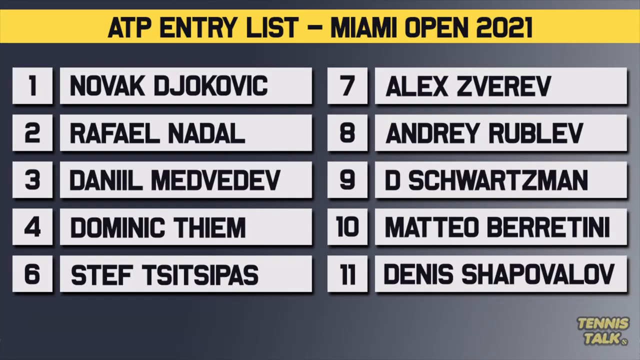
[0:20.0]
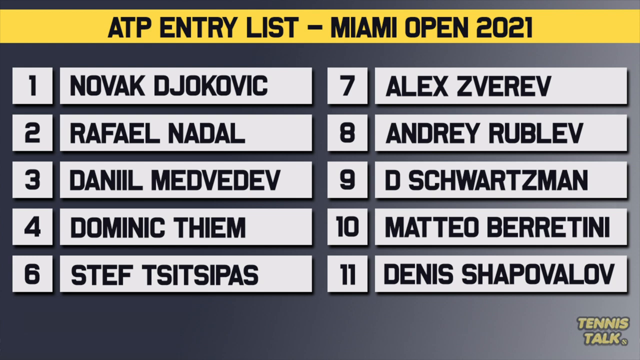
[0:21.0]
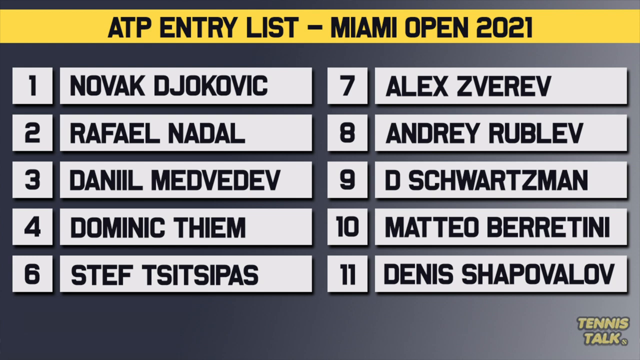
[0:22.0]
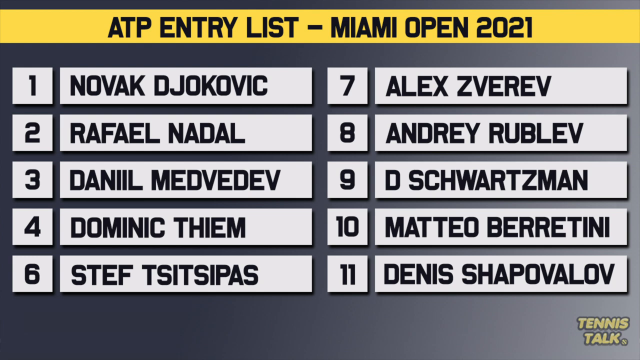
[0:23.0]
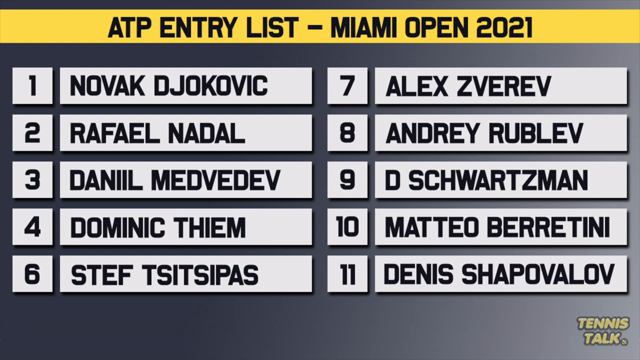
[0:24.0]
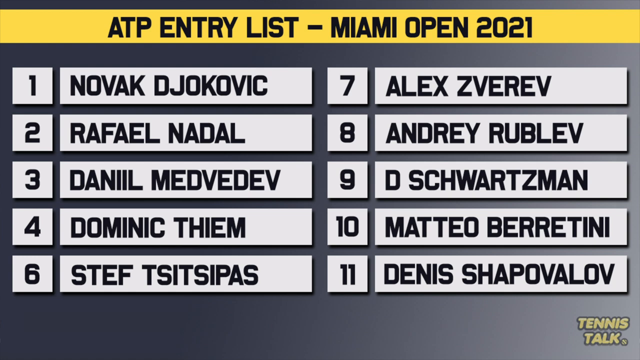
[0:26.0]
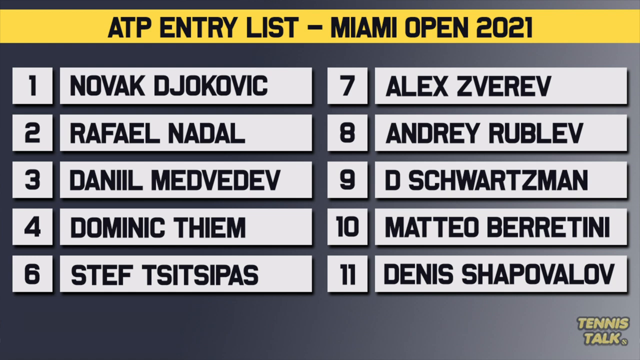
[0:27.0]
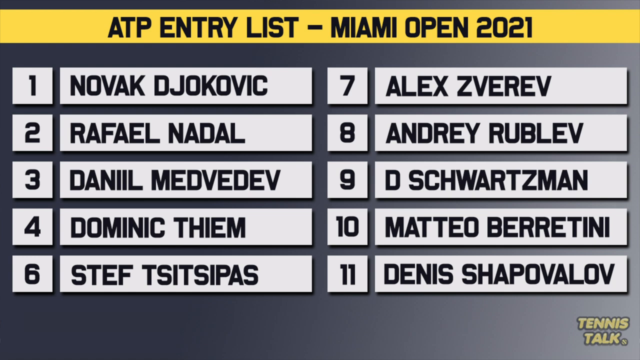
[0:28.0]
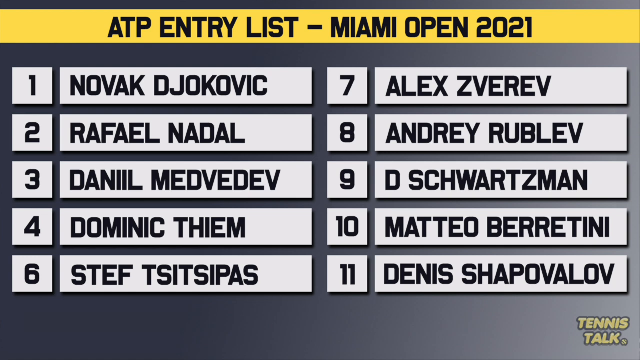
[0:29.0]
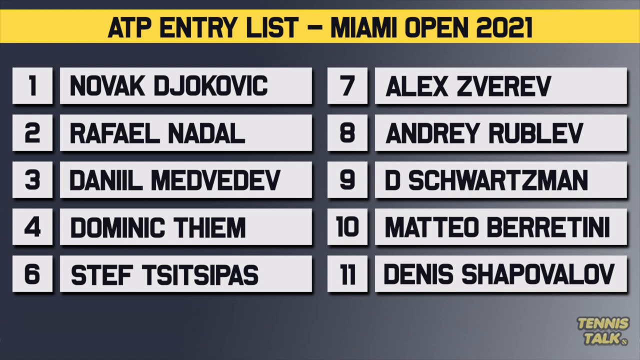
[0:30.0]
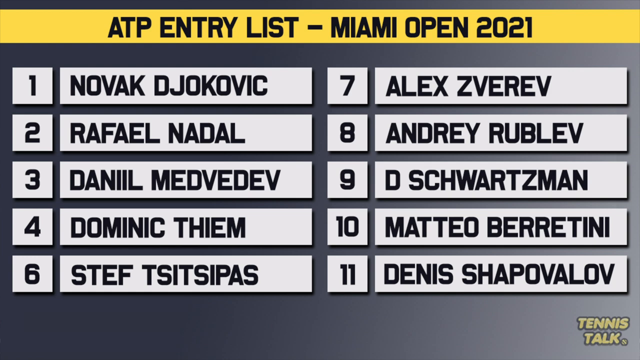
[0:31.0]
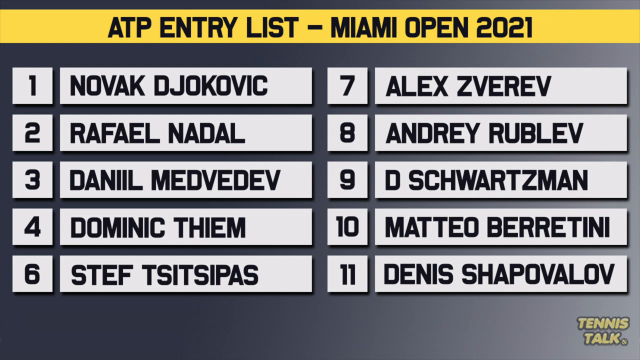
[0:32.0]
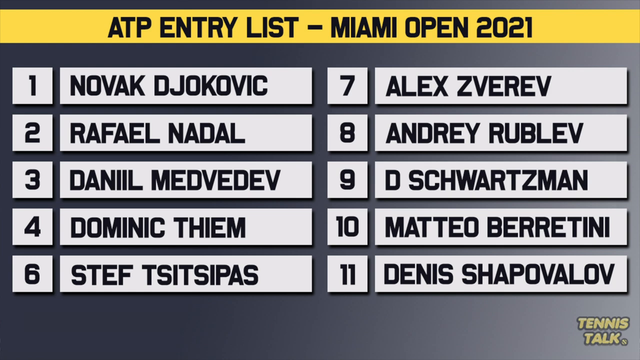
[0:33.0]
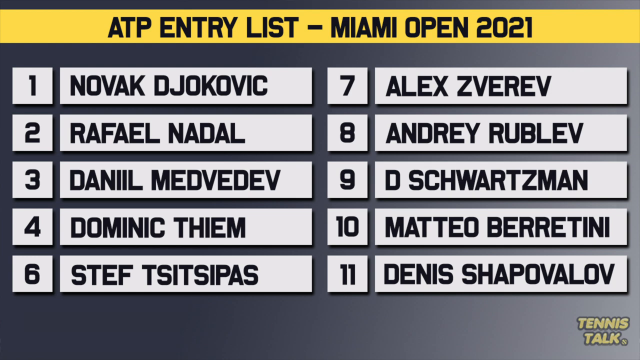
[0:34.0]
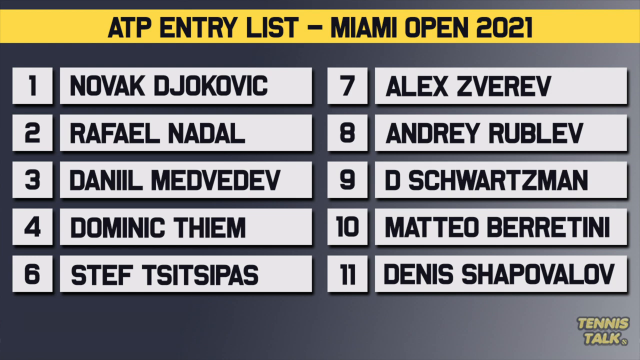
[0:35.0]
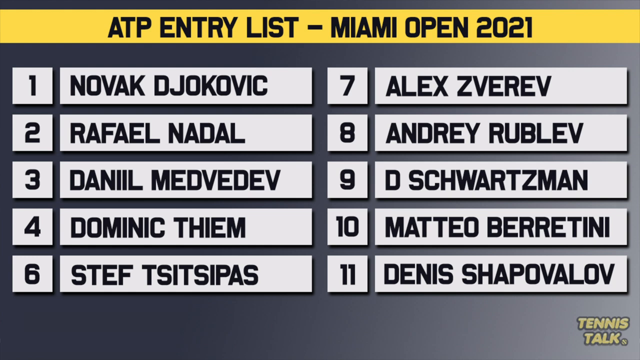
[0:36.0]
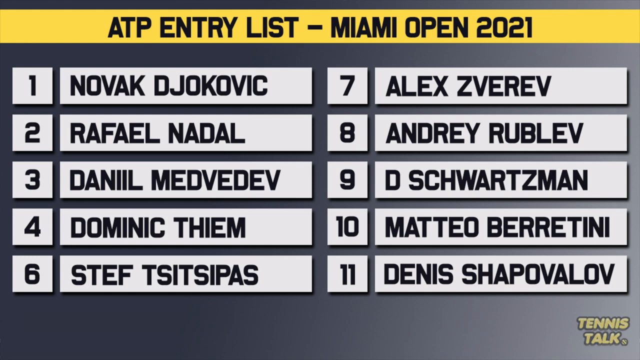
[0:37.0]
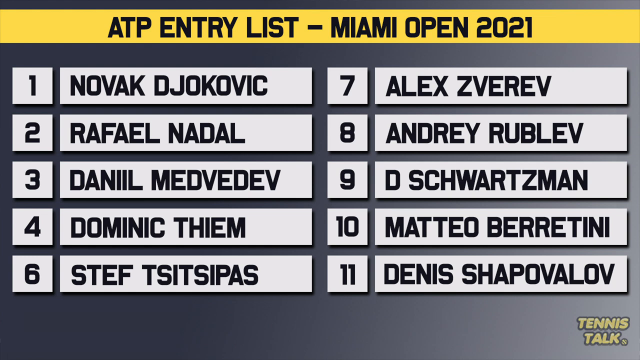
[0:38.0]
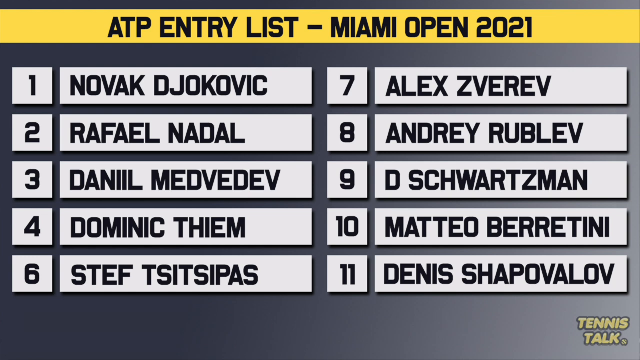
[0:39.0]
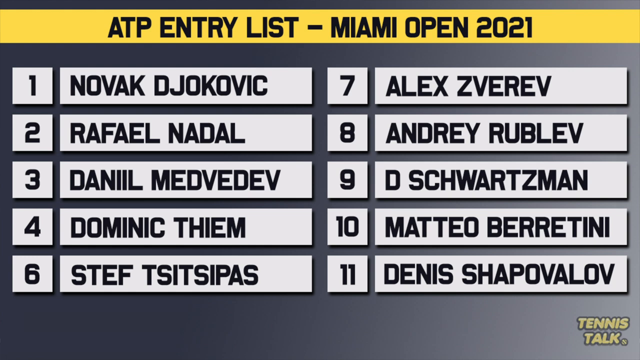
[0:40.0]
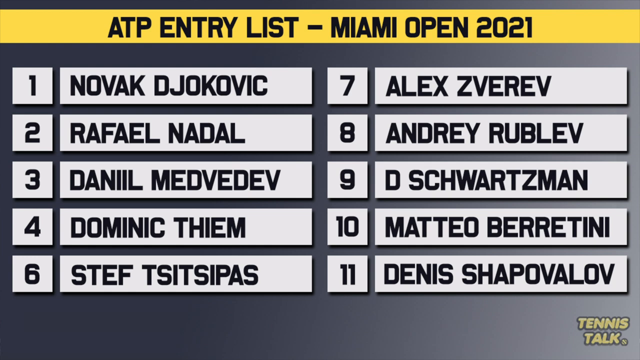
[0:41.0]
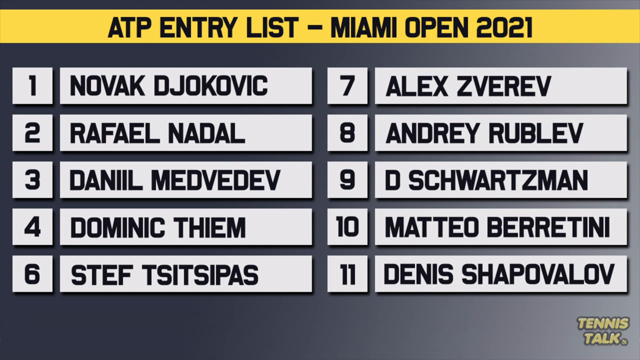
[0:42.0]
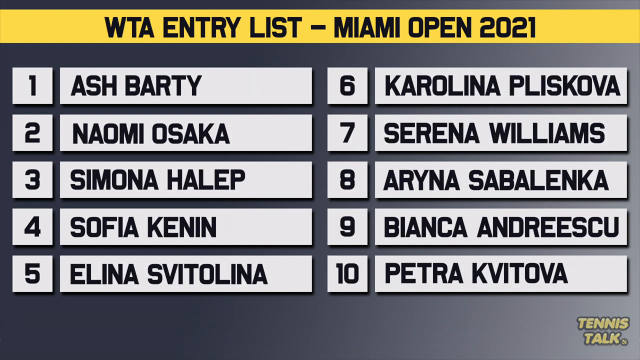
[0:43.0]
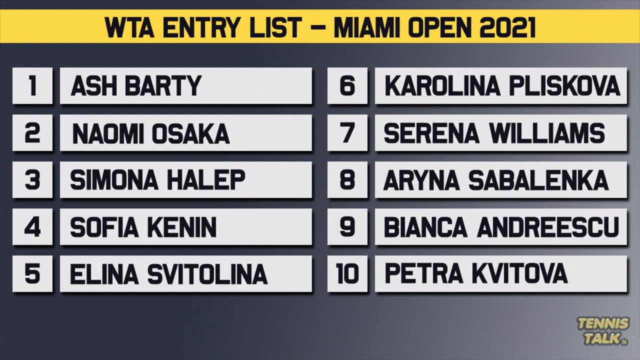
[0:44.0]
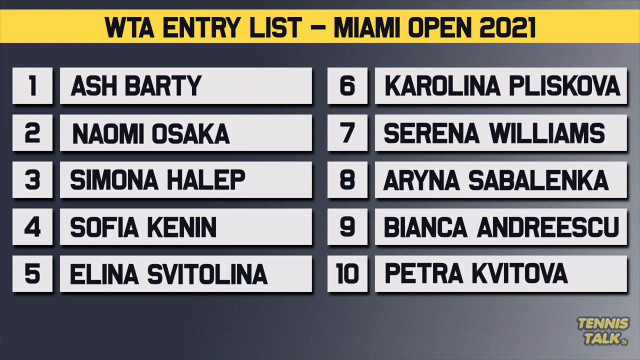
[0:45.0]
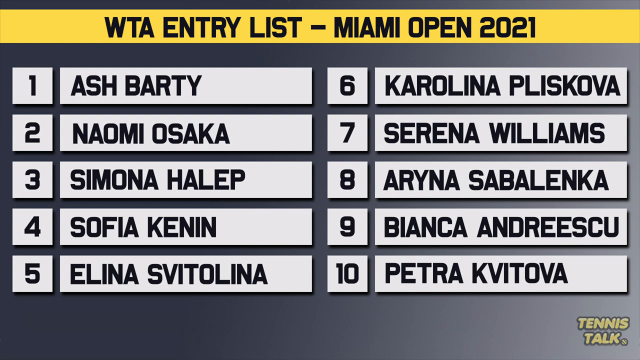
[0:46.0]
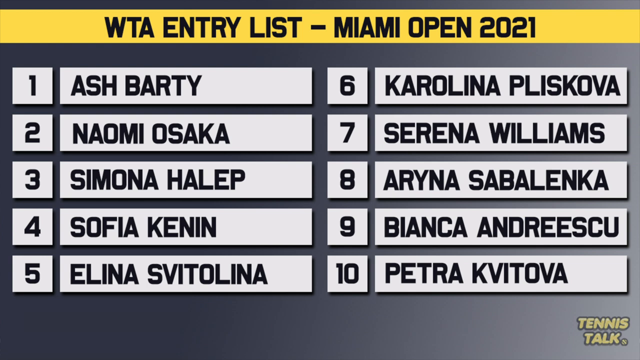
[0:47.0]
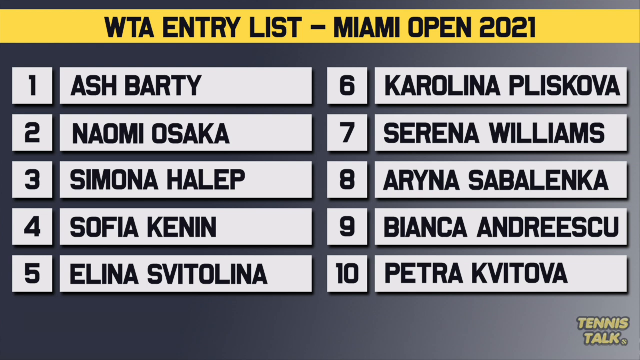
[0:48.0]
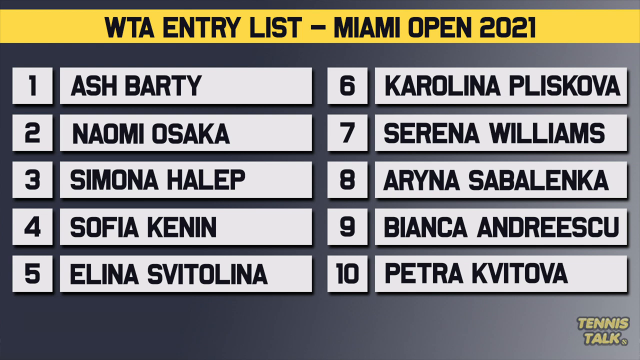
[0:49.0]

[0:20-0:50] A list of the top male seeds for the 2021 Miami Open is on screen. It contains ten names in total, numbered 1 through 5 in the left column and 6 through 10 in the right column. Number 1 is Novak Djokovic, number 2 is Rafael Nadal, and number 3 is Daniel Medvedev. At the top, "ATP entry list Miami Open 2021" appears in black letters, and the table's background is sort of grey with a white gradient. In the bottom right of the screen, "Tennis Talk" appears in yellow letters. Partway through, the screen changes to the women's list, where number one is Ash Barty; like the men's list, it is numbered one through ten.